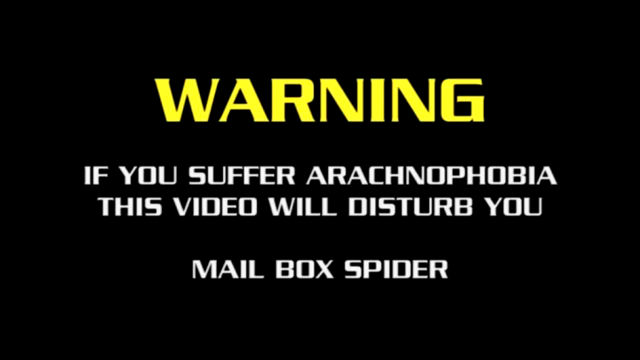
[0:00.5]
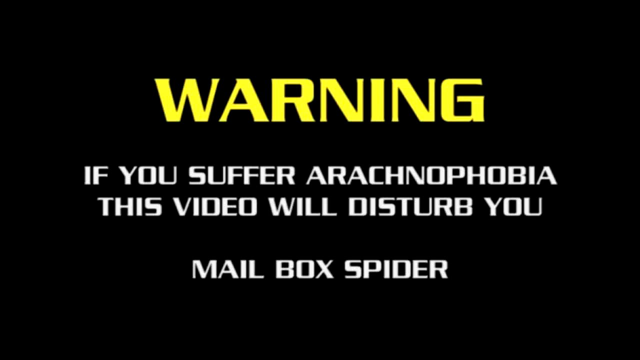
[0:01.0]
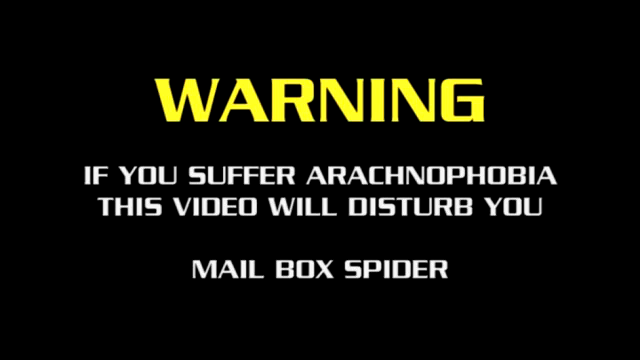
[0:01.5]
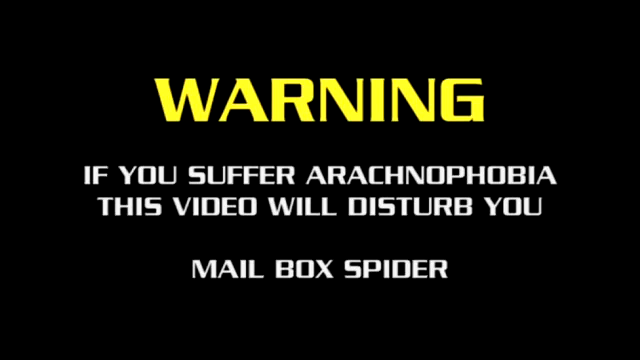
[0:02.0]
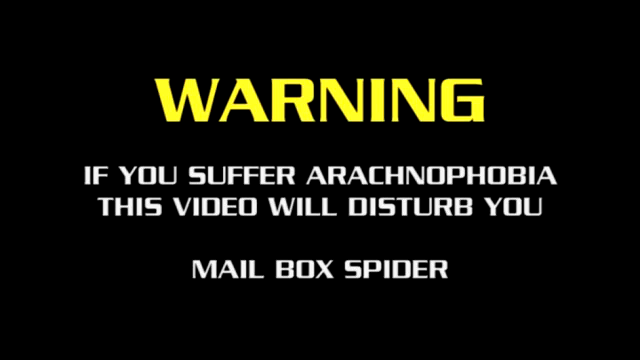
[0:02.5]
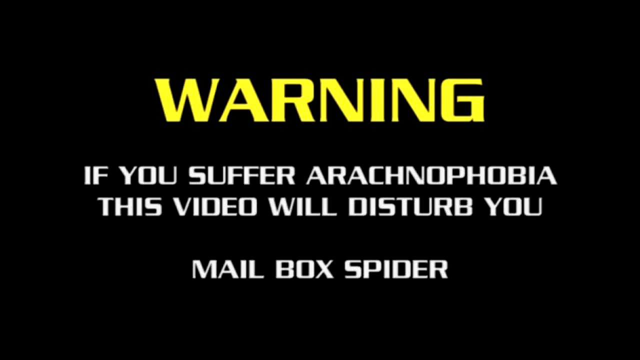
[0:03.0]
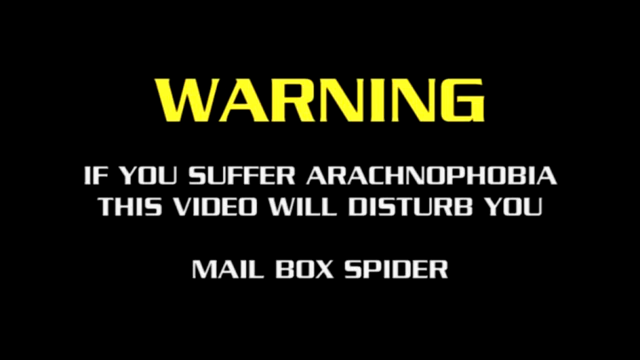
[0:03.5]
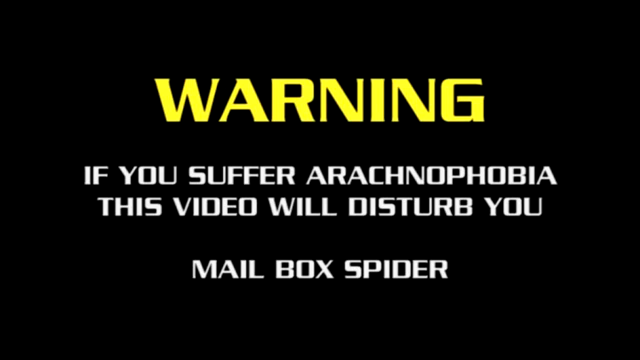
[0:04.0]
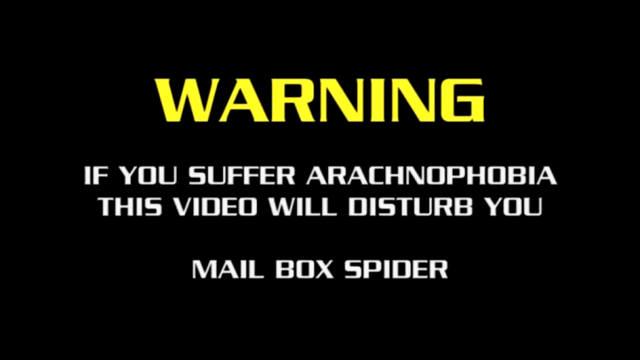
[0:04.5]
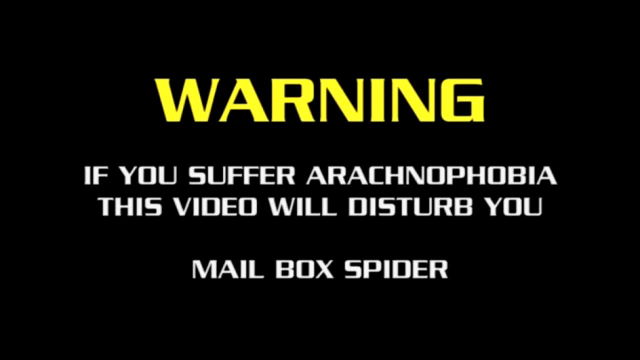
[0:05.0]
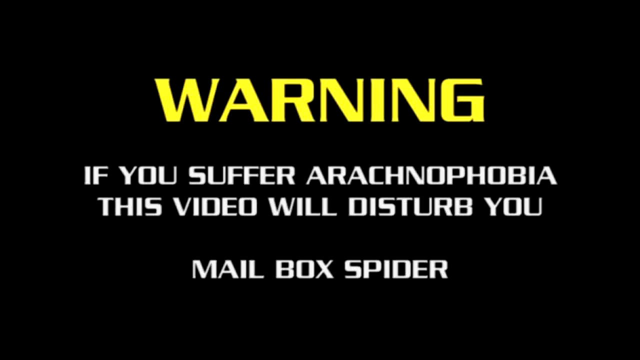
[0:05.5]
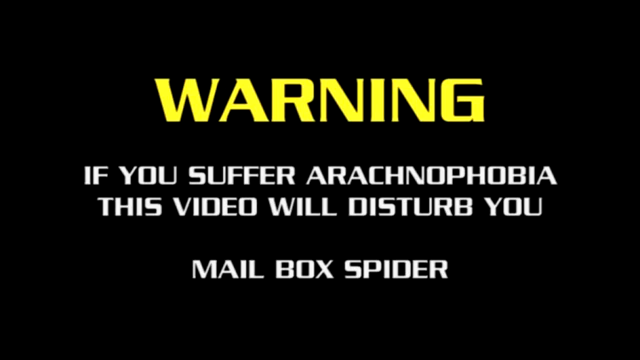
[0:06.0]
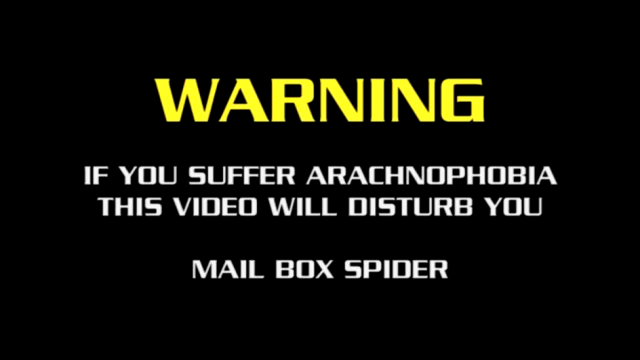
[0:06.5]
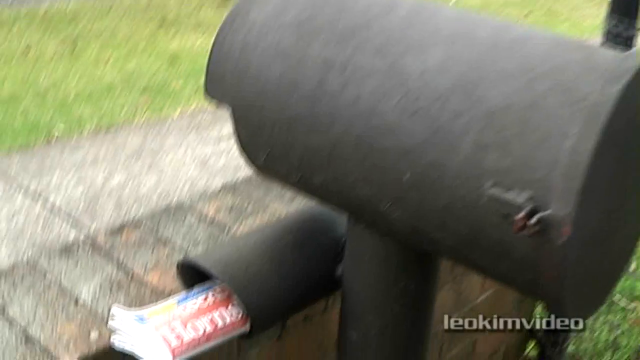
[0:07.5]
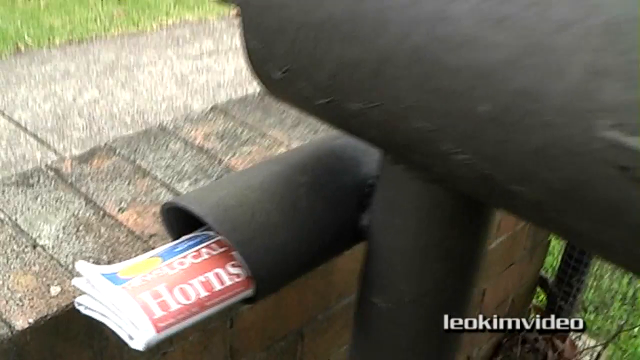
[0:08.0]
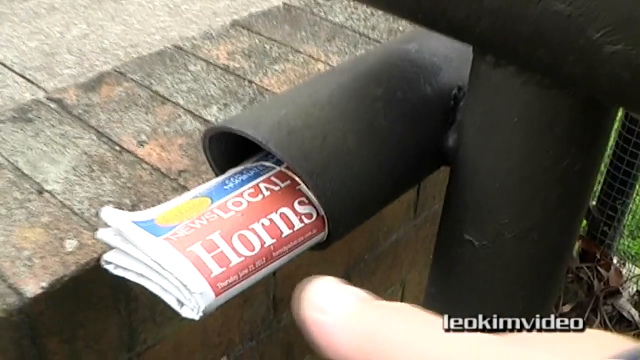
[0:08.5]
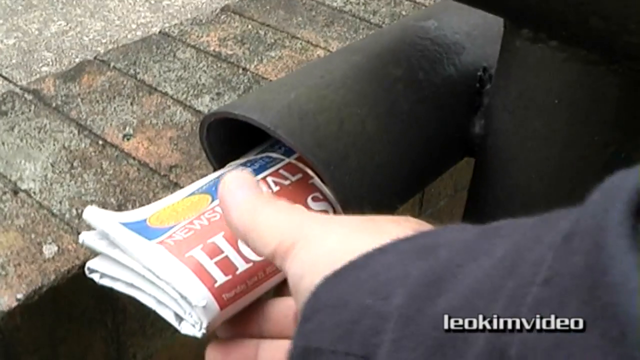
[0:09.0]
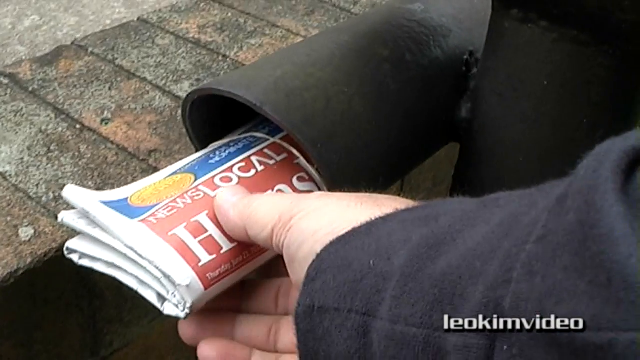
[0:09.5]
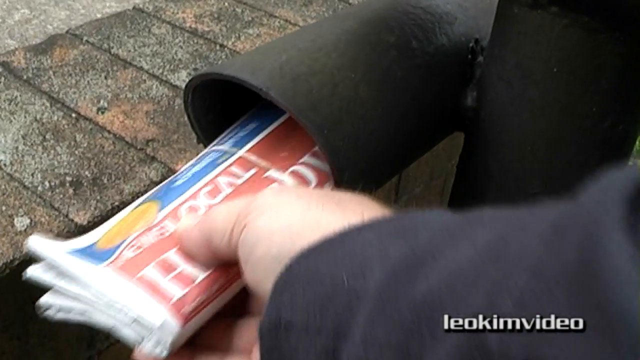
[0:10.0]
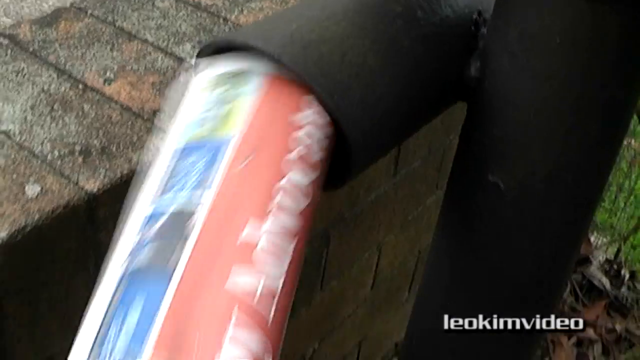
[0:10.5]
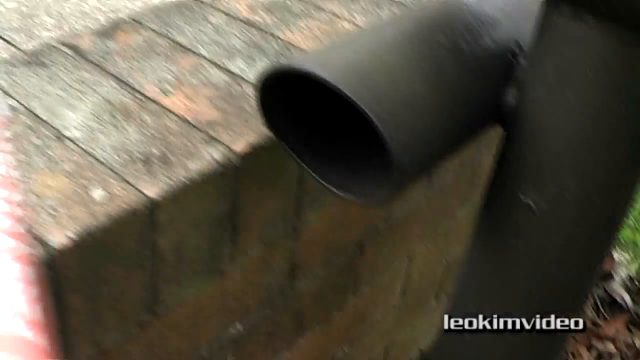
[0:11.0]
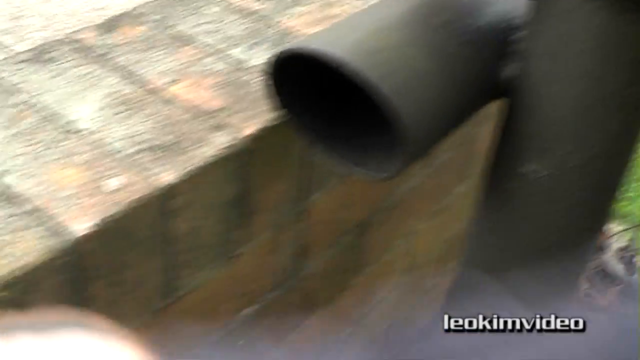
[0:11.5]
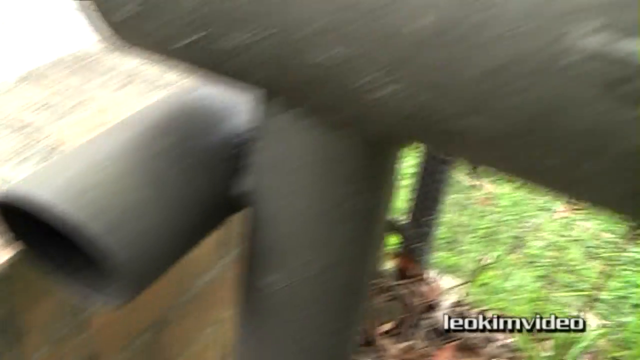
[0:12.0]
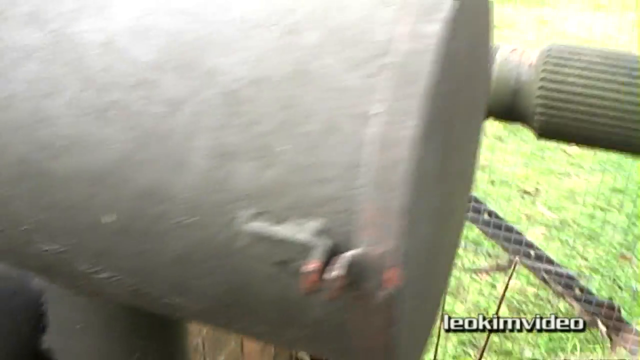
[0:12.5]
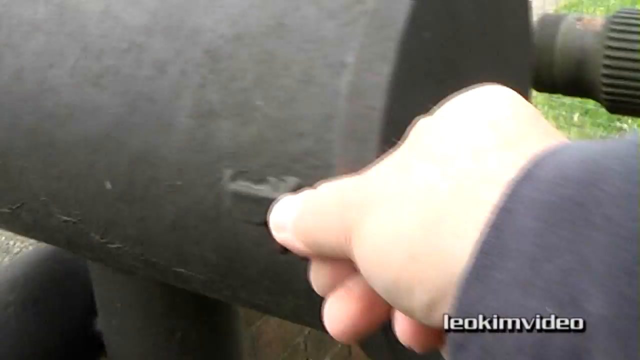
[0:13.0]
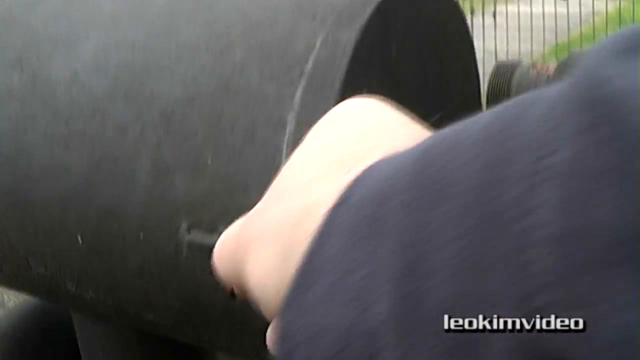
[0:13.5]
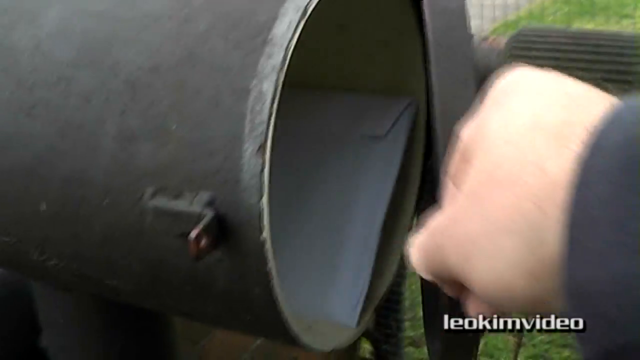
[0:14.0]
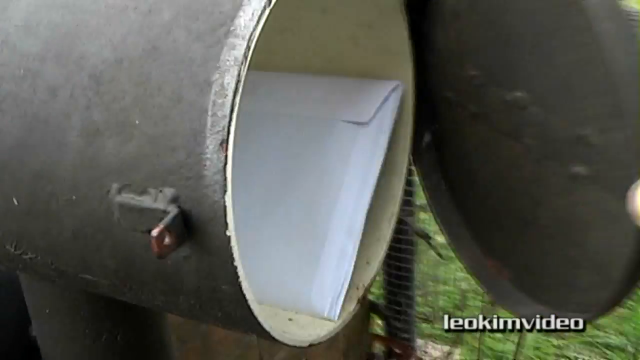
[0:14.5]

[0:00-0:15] A man pulls a paper out of a paper box and opens a mailbox that holds a piece of mail. There is a warning about a mailbox spider. The mailbox is black and round, while the paper box is oval, and the inside of the mailbox is a vanilla or manila color. The mailbox is outside along something like a brick wall, half wall or fence. Next to the brick fence is a wood fence, probably belonging to another property, and behind the fence there is something like a concrete sidewalk. There are grass areas next to the brick fence, and a small portion of the roadway is visible.